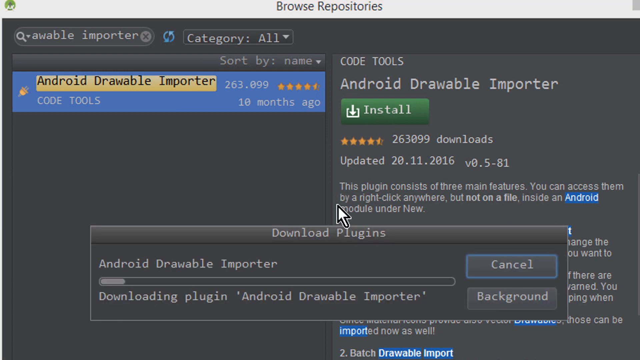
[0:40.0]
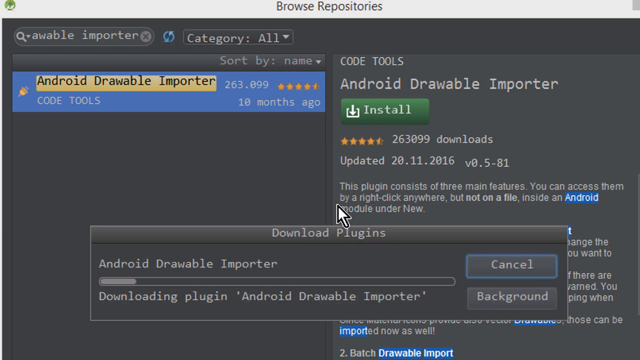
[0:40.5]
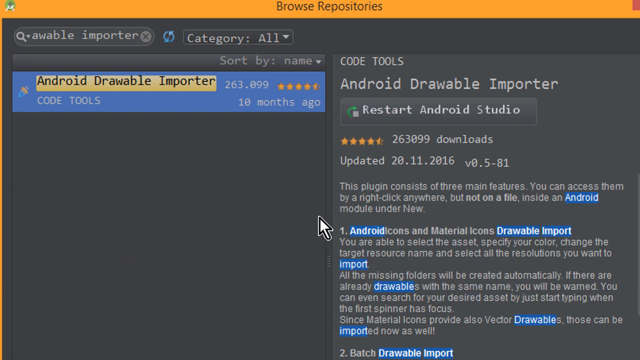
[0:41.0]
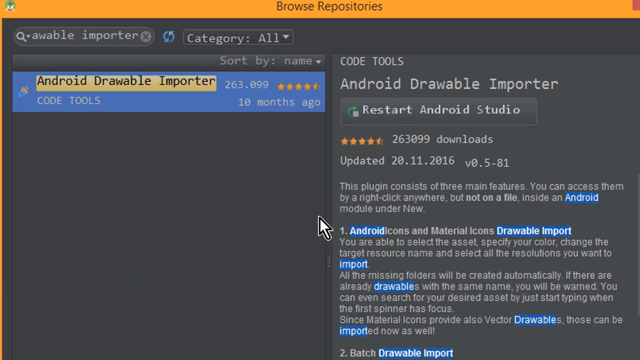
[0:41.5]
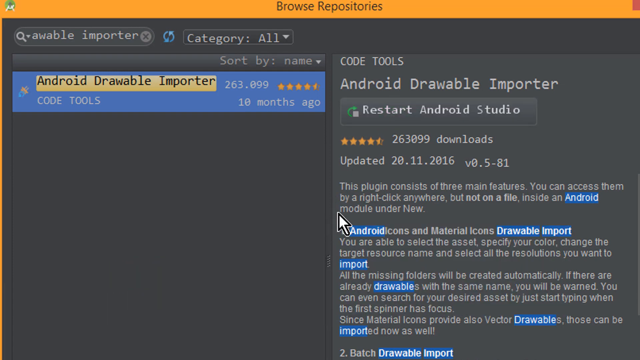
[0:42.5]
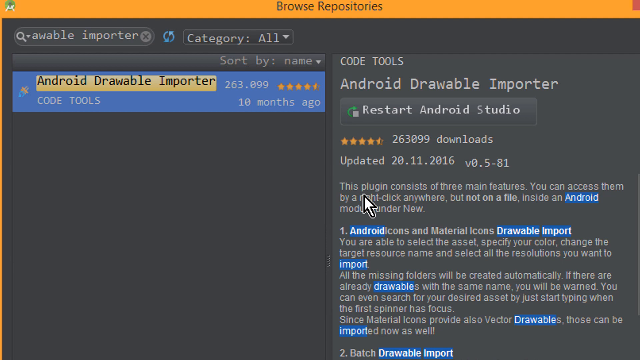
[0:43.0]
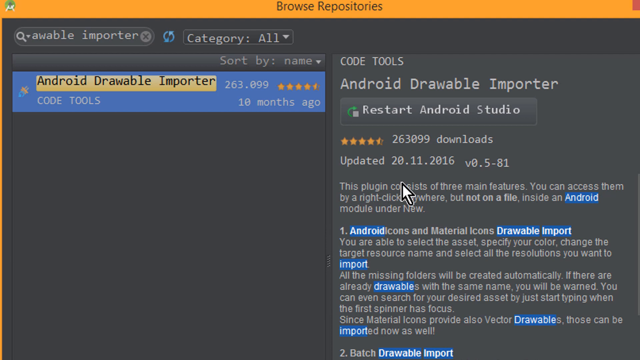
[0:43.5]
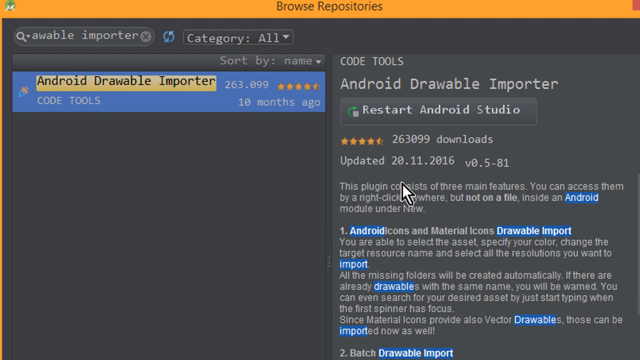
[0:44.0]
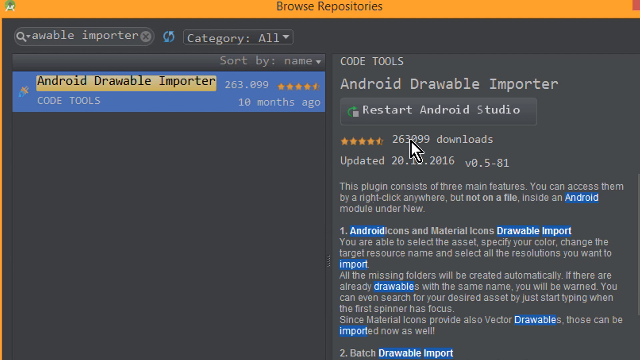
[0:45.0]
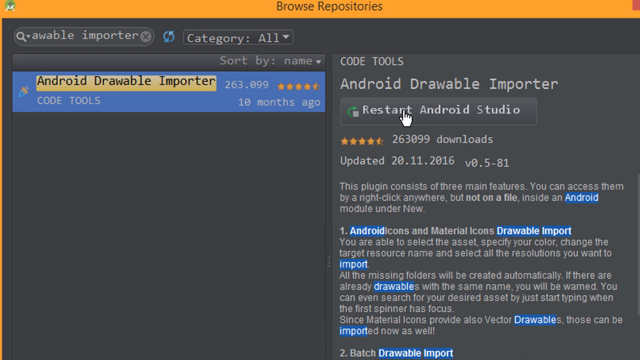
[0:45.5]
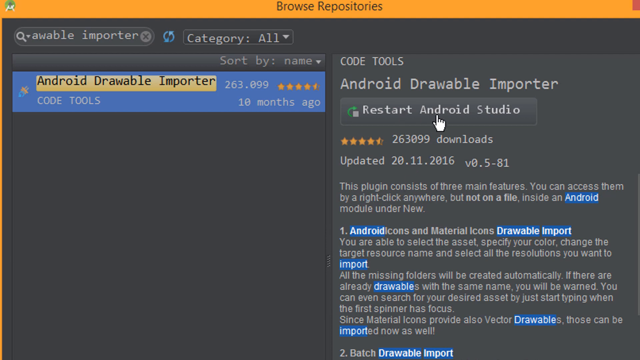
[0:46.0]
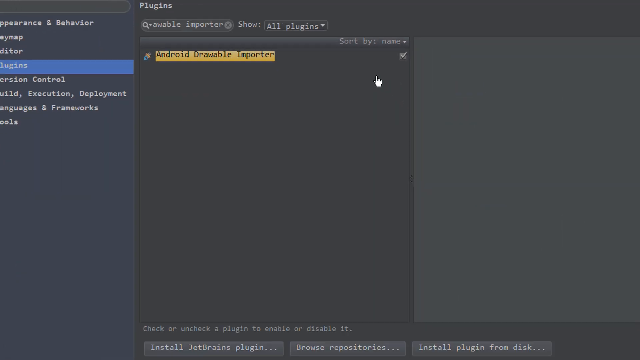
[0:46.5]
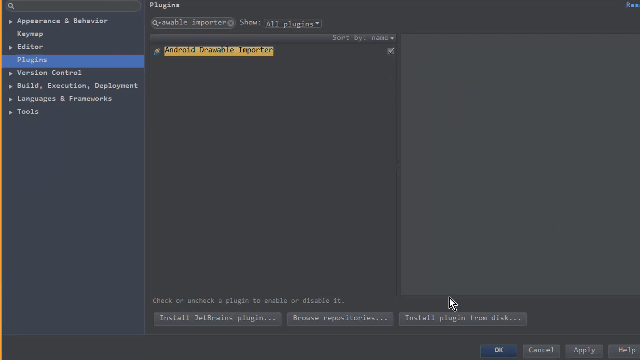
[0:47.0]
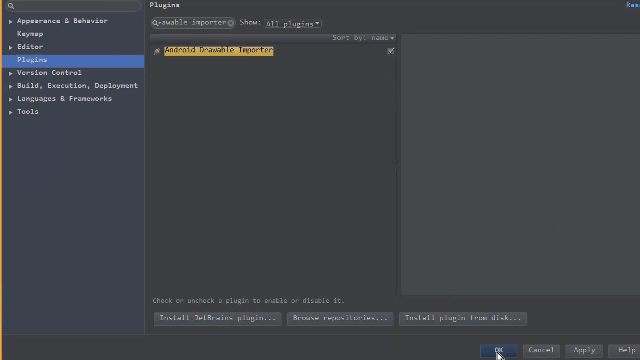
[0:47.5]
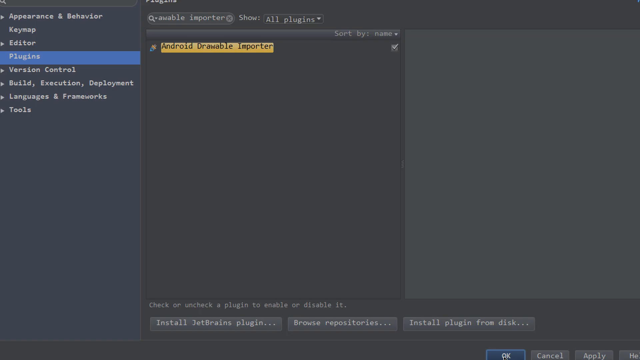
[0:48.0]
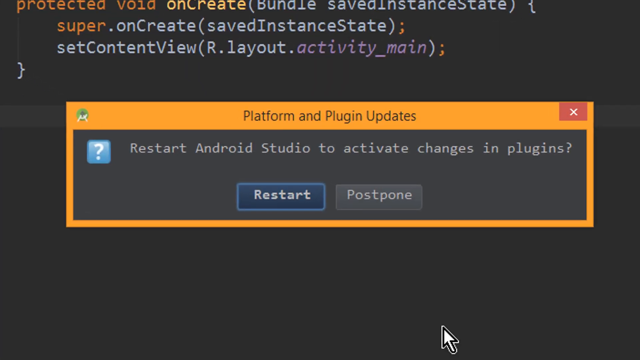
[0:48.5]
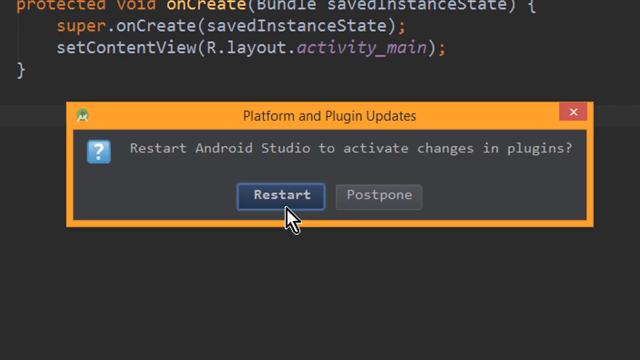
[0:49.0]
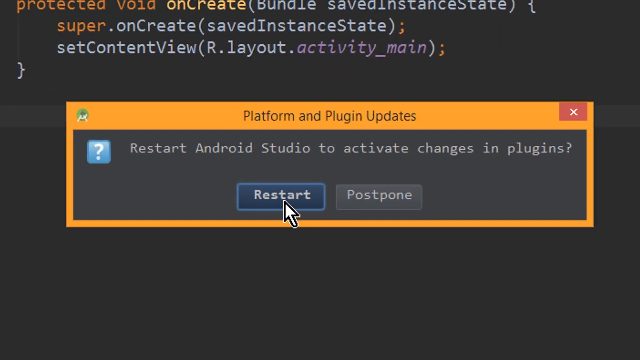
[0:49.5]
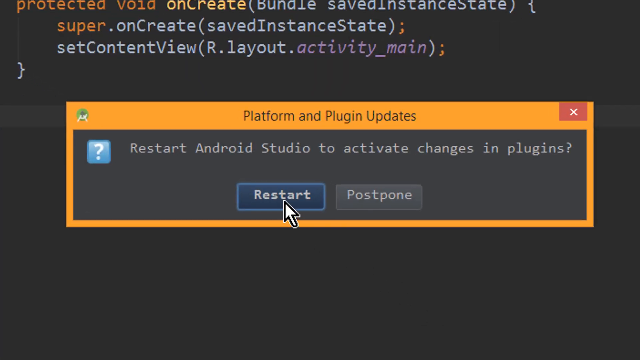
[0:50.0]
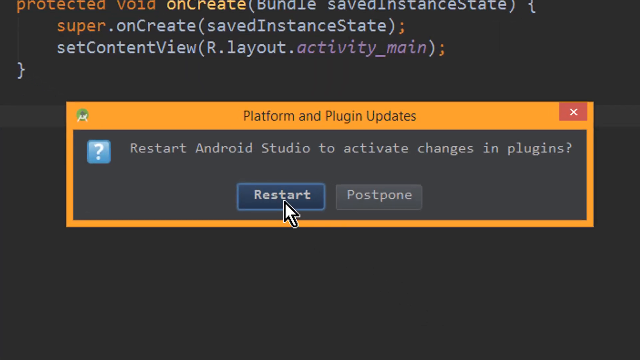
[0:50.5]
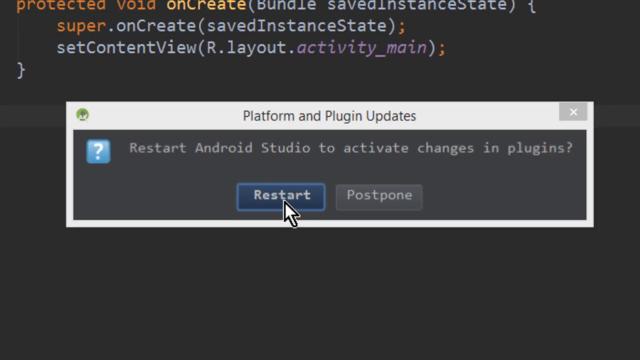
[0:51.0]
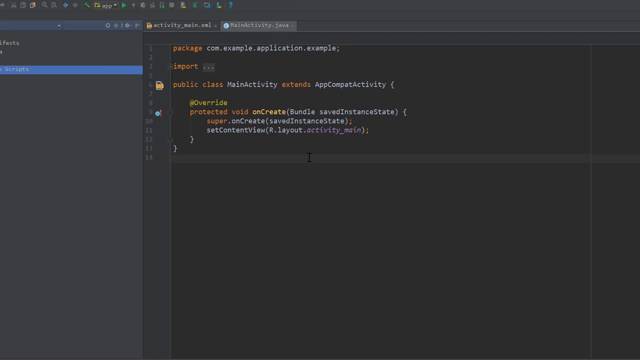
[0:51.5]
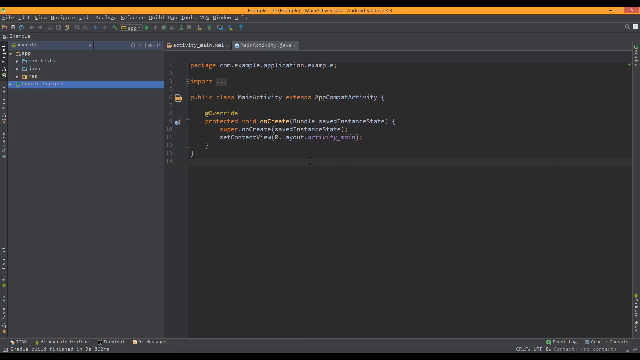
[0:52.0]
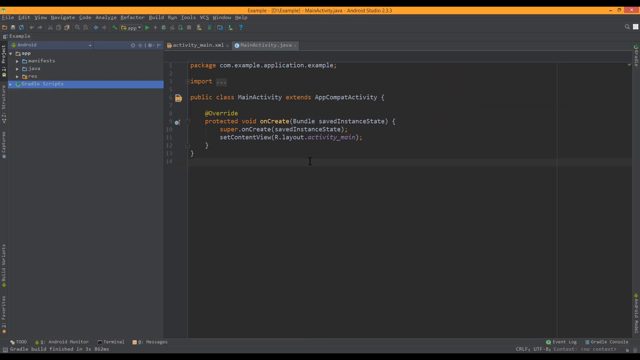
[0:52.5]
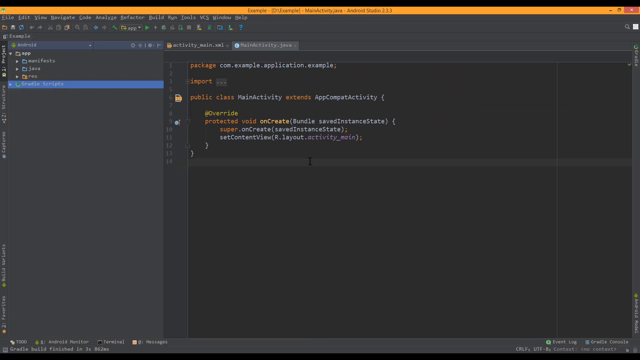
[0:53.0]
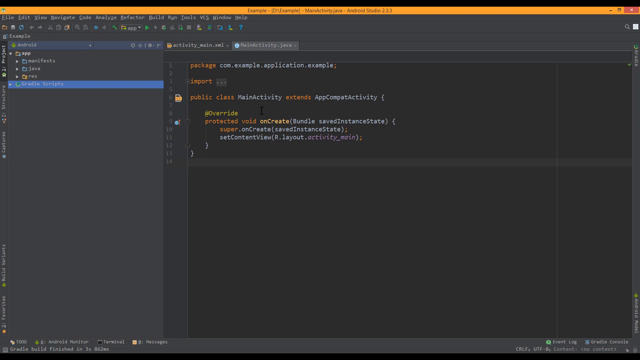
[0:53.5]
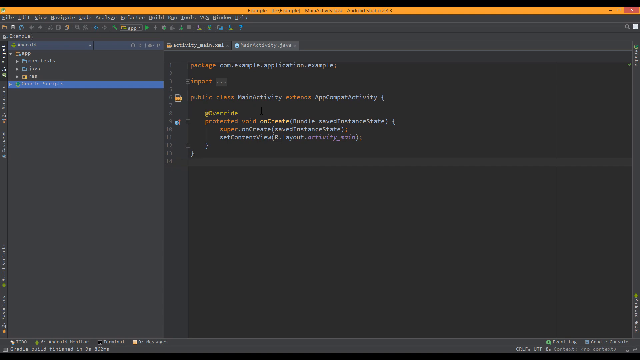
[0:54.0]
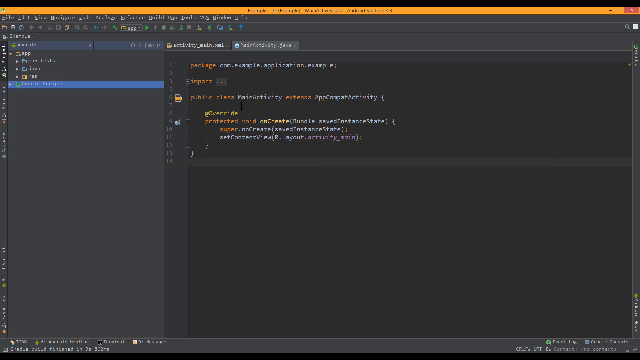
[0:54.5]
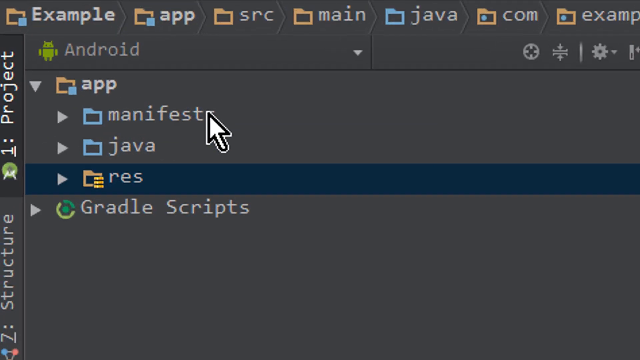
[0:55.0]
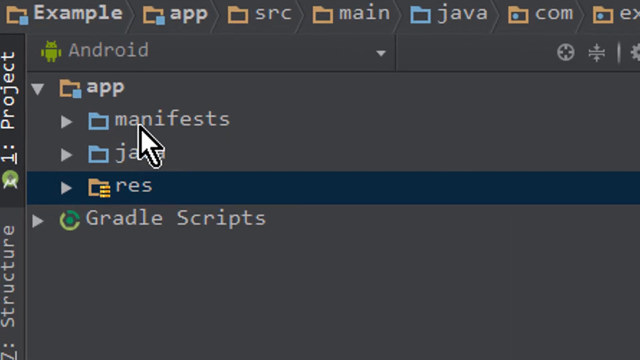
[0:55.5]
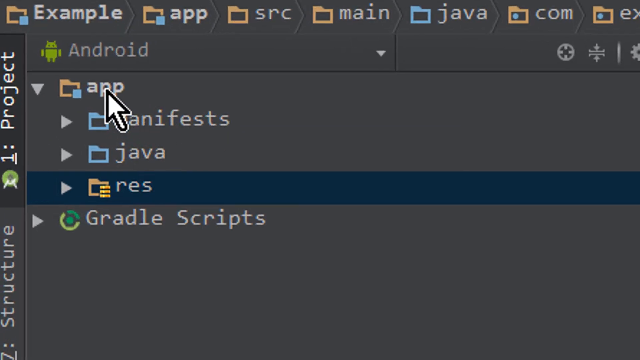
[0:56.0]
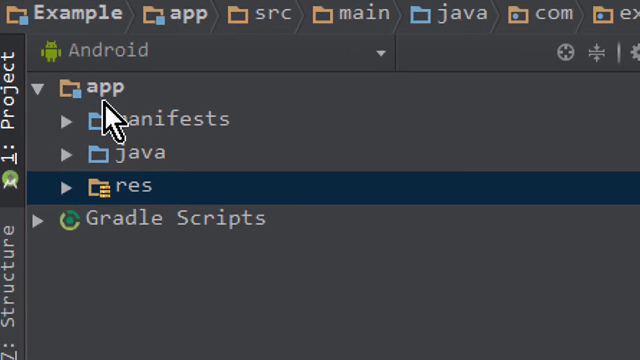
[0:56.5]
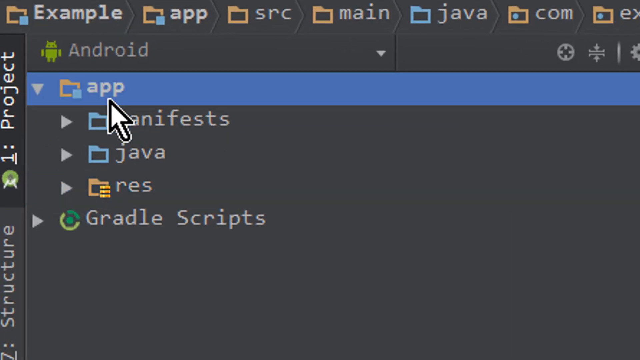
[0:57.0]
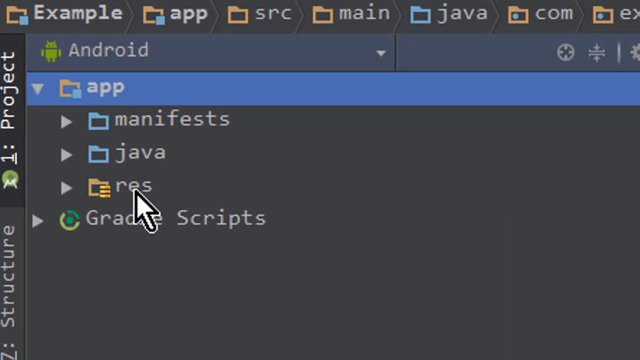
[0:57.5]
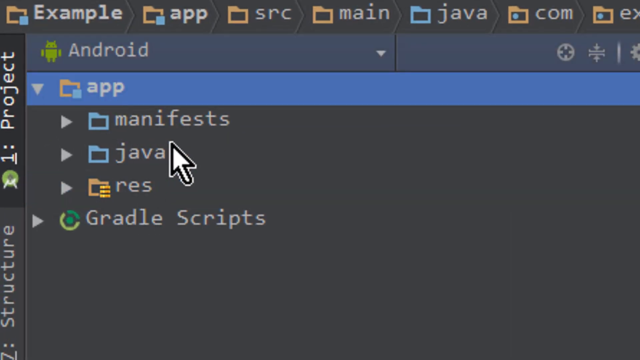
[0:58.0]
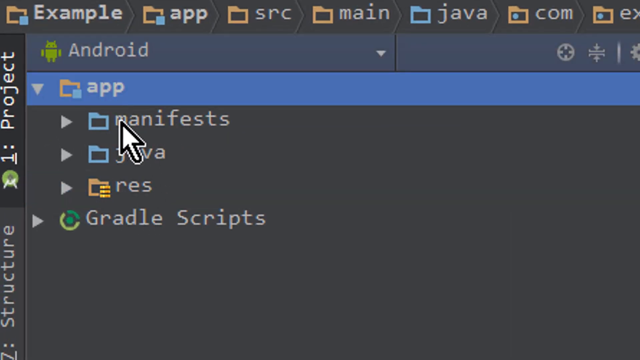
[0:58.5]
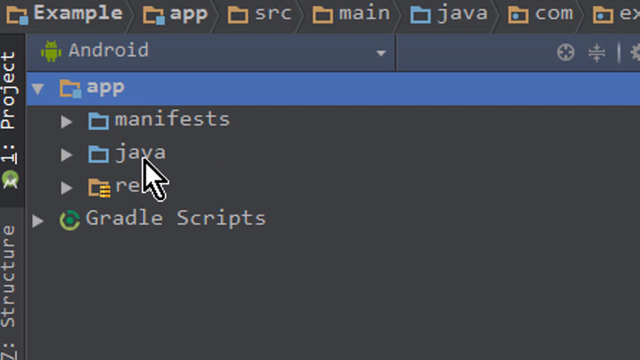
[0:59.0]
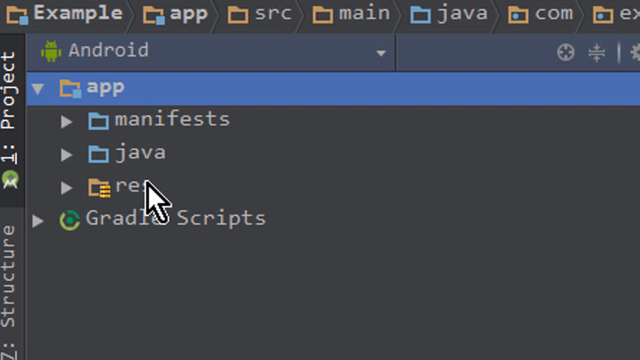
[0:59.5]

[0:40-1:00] The black download plugins box is open at the bottom of the screen. In the middle of it is a grey circular loading bar, black in the middle, and as the loading completes from left to right the black is replaced with grey. The view then transitions to after the Drawable Importer has finished downloading. The Android Drawable Importer screen is still shown, but instead of the download button there is now a grey button reading "Restart Android Studio", which the user moves the mouse onto and clicks. The view transitions to the screen with the orange and white code, and an orange box pops up with black text at the top reading "Platform and Plugin Updates". Inside the orange box is a black box with grey text reading "Restart Android Studio to activate changes and plugins", and a blue "Restart" button, which the user selects. The view then transitions to the list of folders on the left-hand side of the screen under the Android heading.